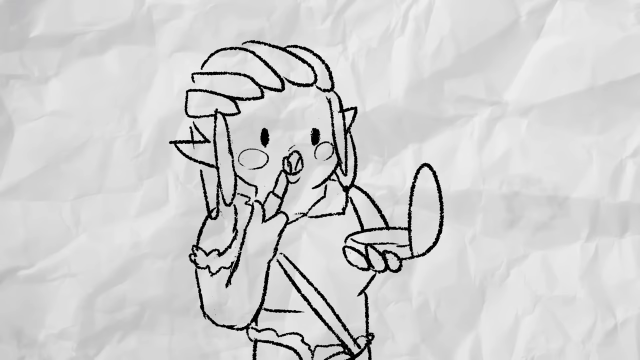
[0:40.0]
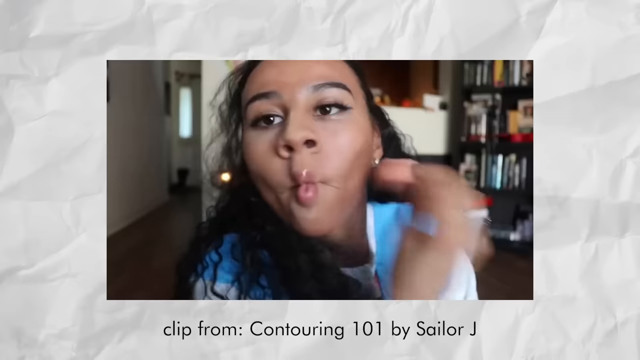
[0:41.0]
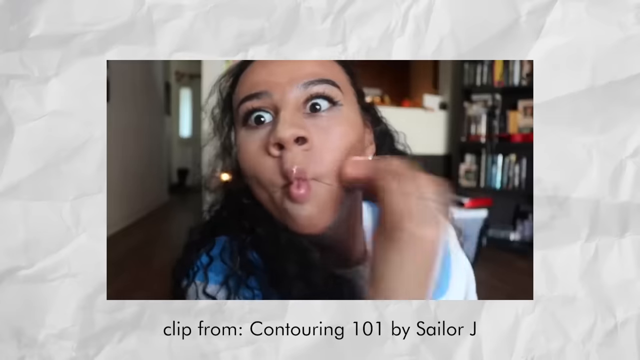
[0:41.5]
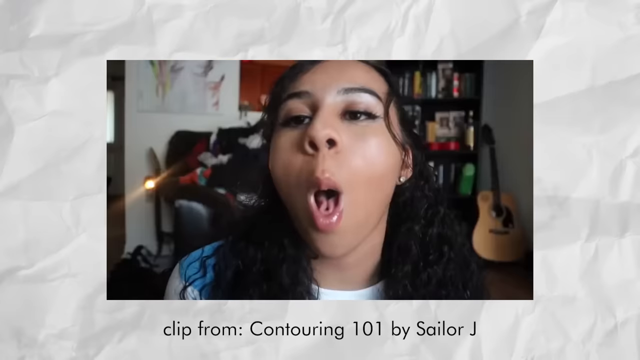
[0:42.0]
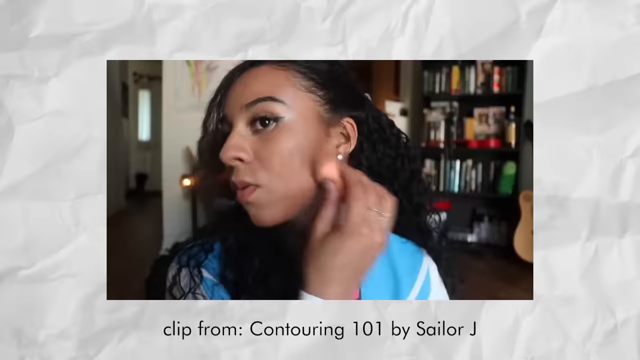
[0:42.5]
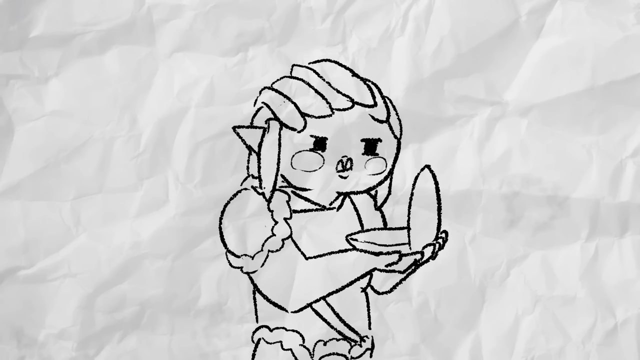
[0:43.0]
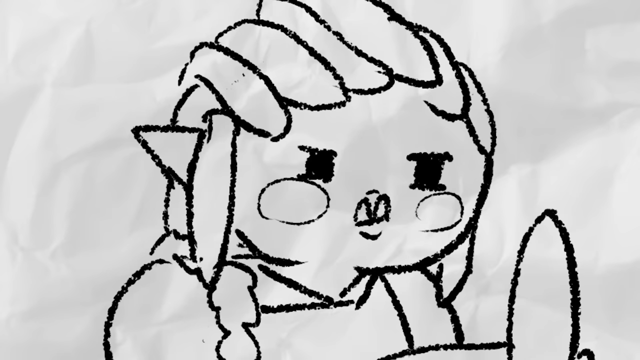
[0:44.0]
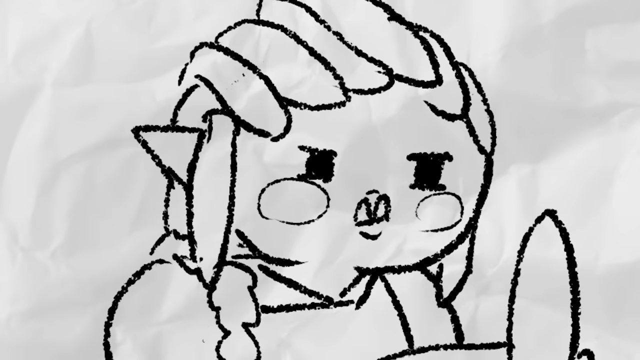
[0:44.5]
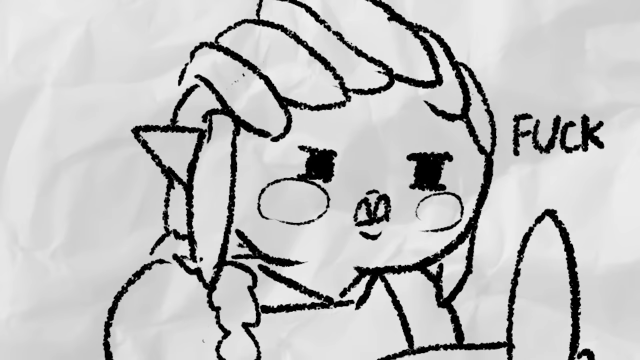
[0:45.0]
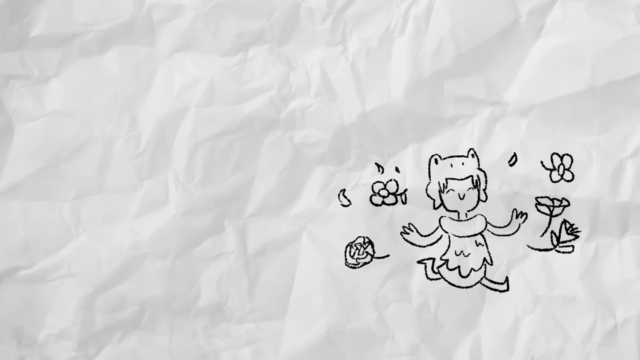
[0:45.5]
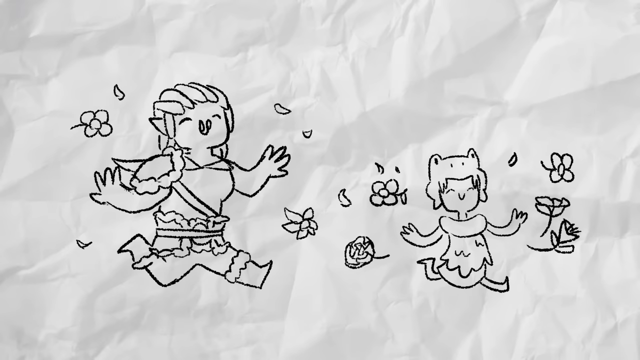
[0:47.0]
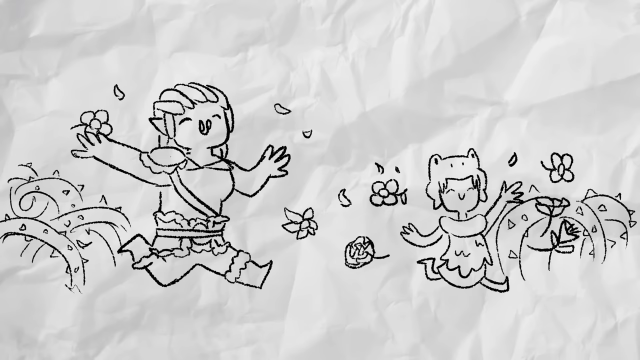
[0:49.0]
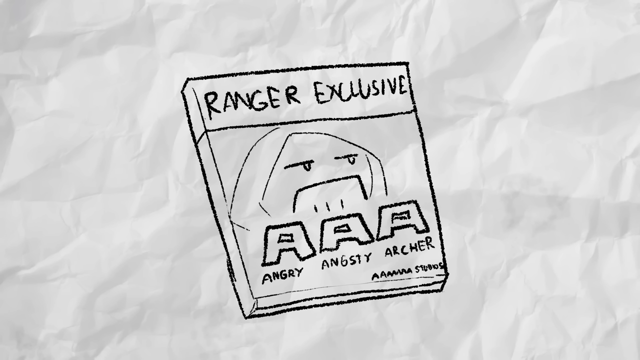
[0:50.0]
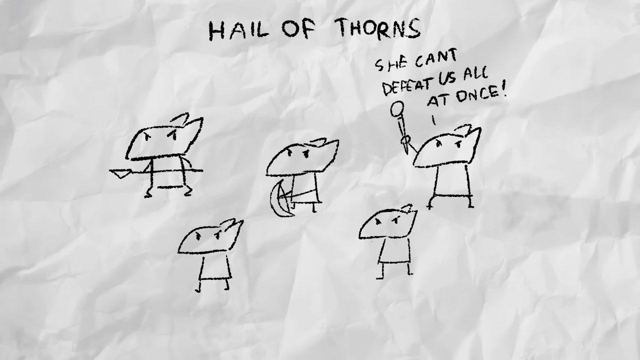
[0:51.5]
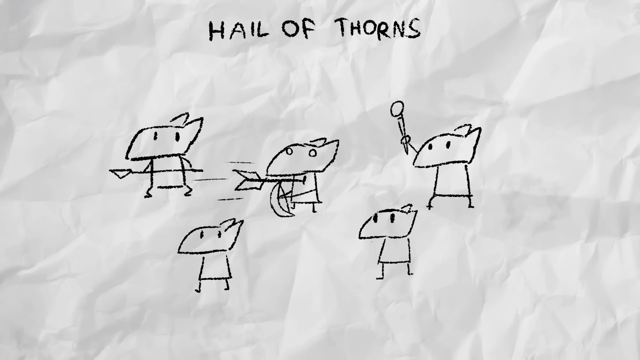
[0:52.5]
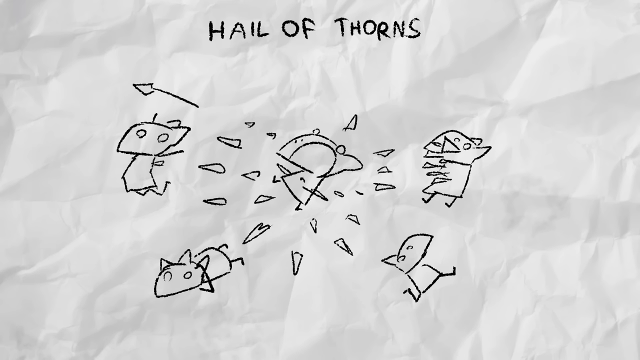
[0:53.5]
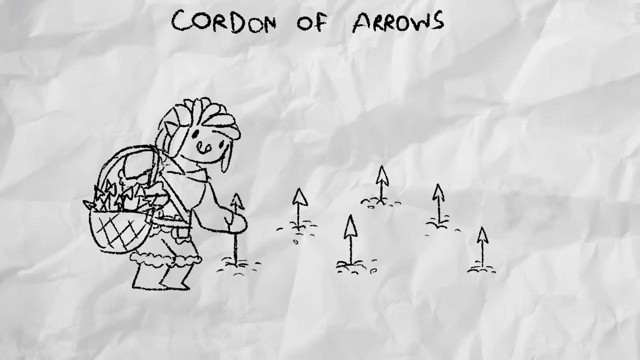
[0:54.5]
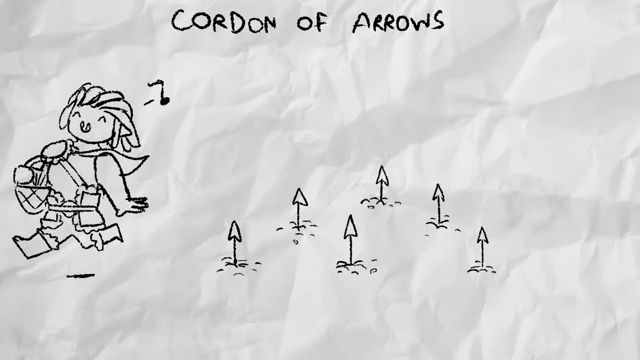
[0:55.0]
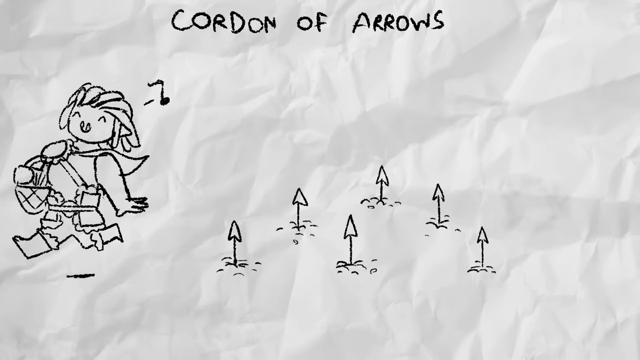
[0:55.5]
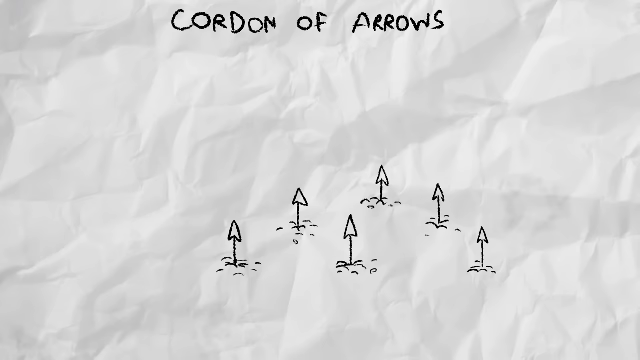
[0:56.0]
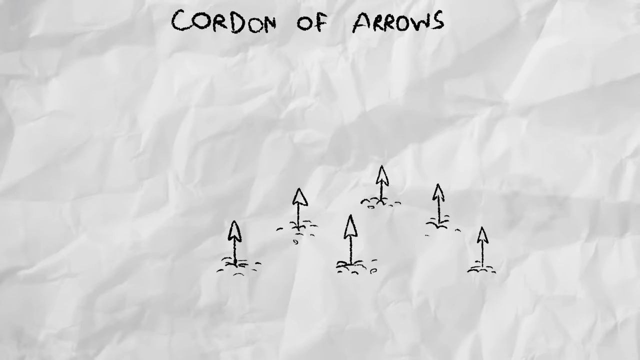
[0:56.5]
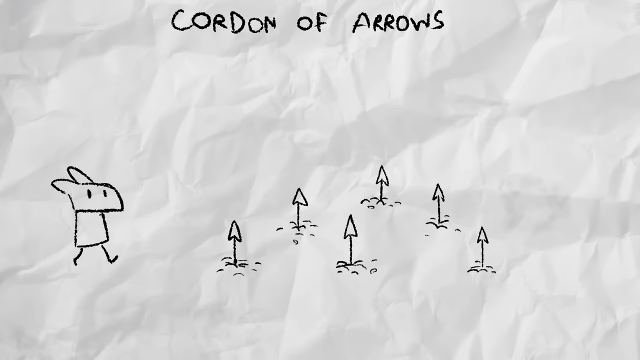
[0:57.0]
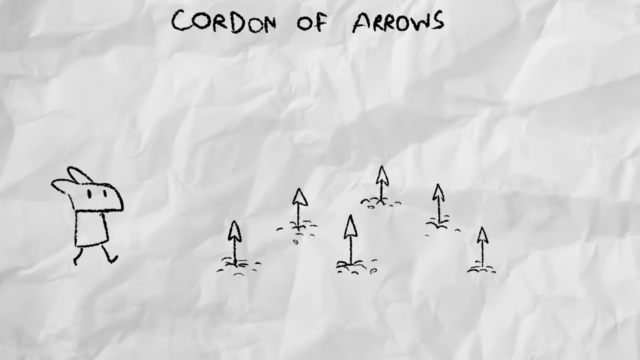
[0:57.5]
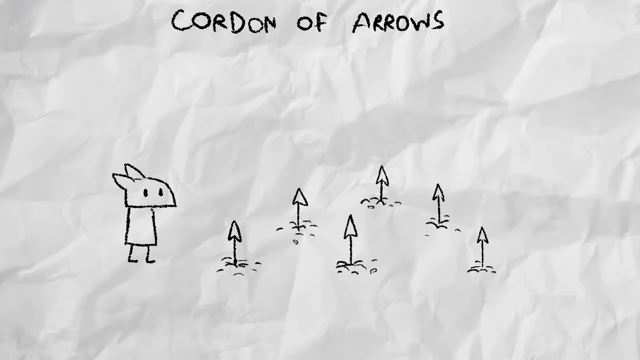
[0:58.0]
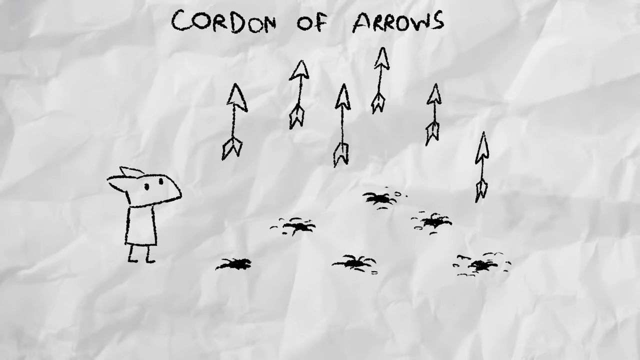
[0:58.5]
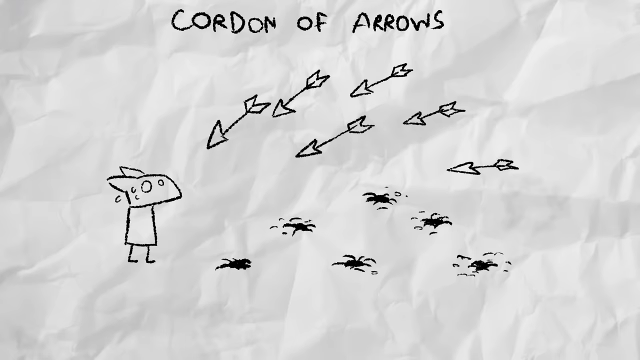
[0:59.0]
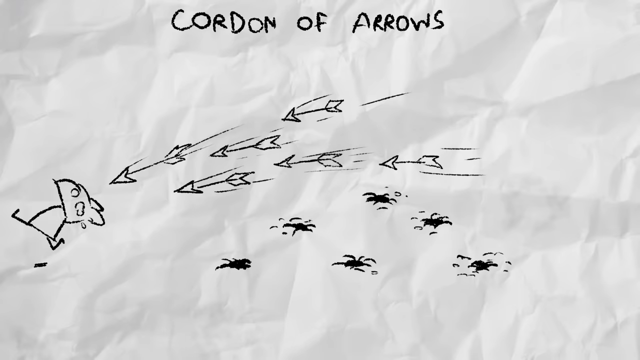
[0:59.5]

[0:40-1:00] The image shows someone who looks to be an orc with green skin and red hair, holding a brown bow and arrow. Above this it says "proficiency and equipment," and on the right side it says "starting stuff a bunch of weapons you won't use hippie shit i don't know climbing probably ammo ammo more ammo a useful melee weapon." It cuts to multiple weapons drawn on a page, people dancing, and a scene from Disney's The Emperor's New Groove, then to a person holding a mirror to themselves, and then to another person with a frog on their head jumping around flowers and vines on the ground. It then cuts to "ranger exclusive" and shows a person with a mean face. Text says "Hail of thorns, she can't defeat us all at once." Five little mice hold weapons, screaming and angry, and an arrow hits one of them and explodes.